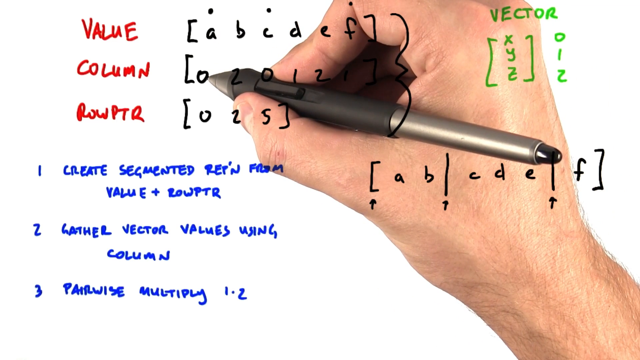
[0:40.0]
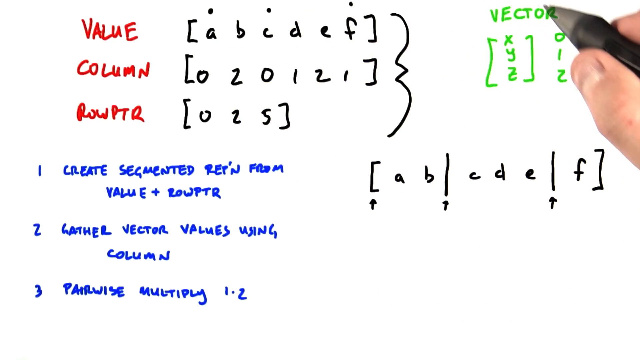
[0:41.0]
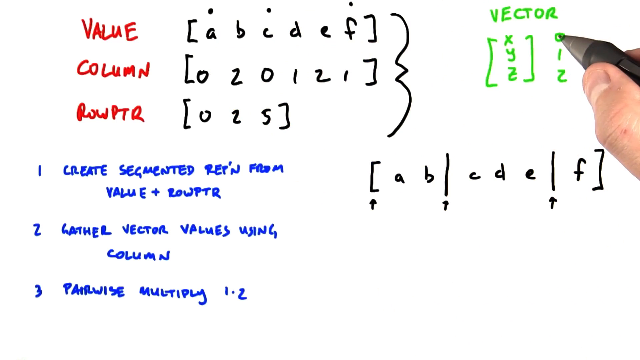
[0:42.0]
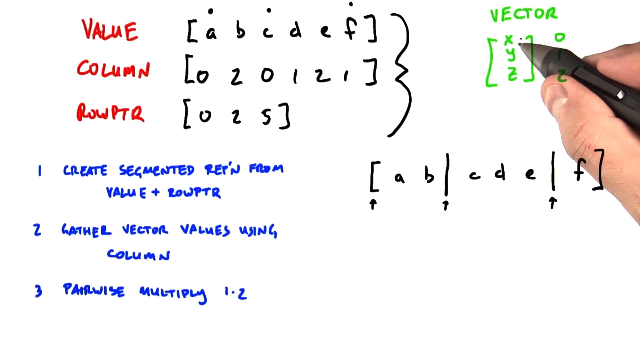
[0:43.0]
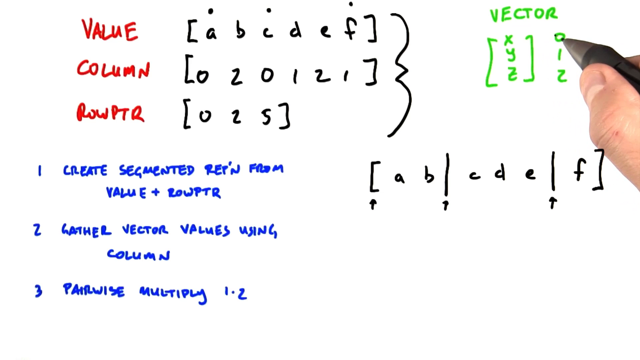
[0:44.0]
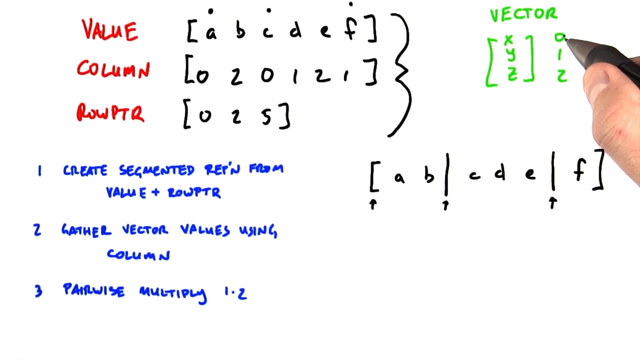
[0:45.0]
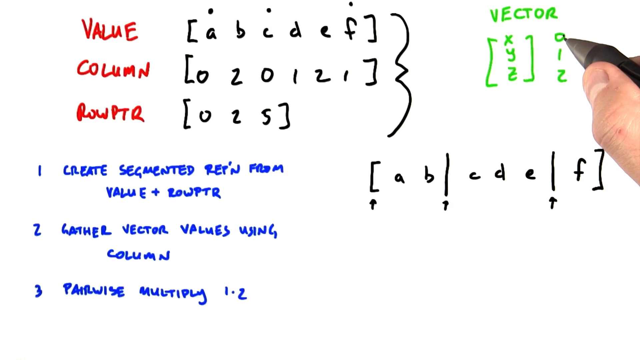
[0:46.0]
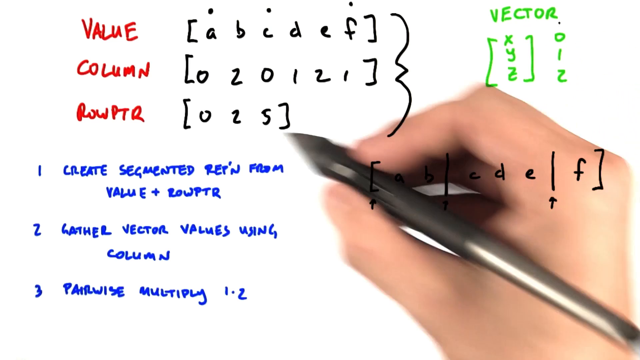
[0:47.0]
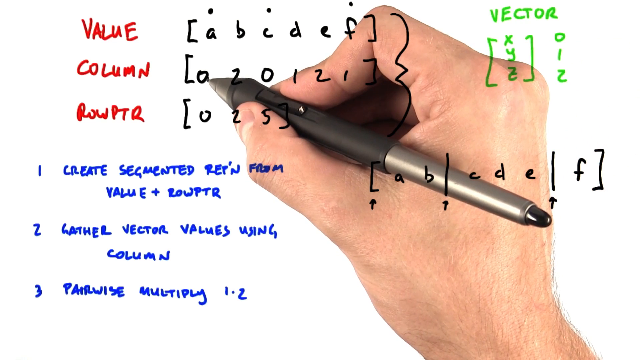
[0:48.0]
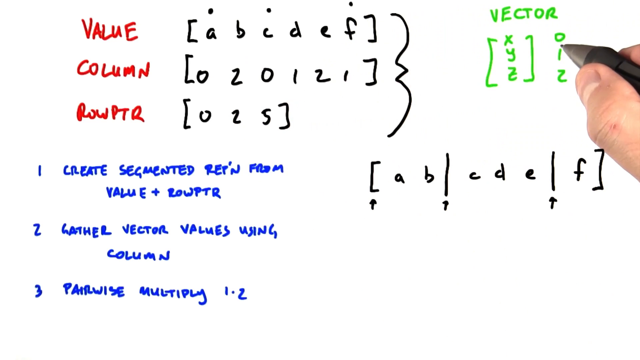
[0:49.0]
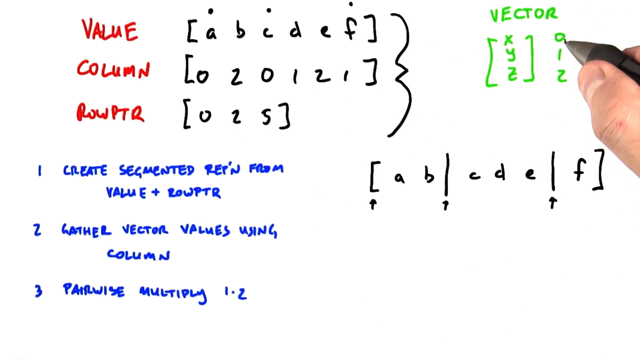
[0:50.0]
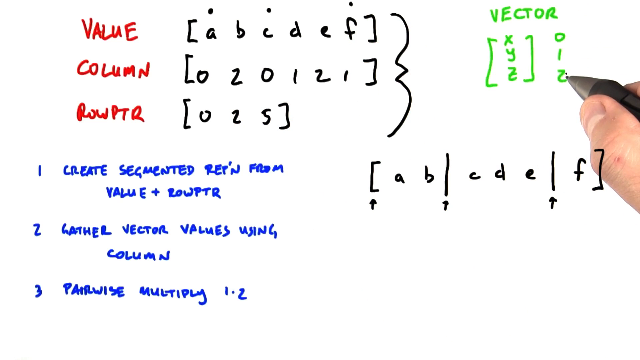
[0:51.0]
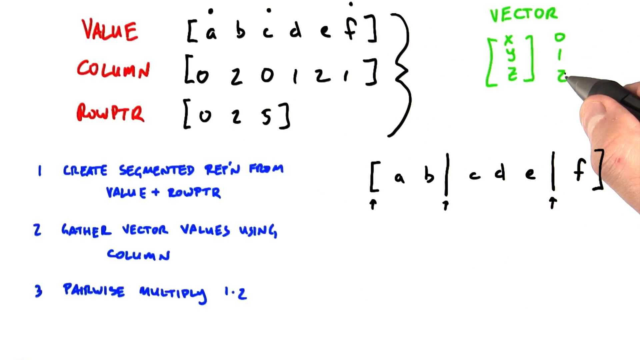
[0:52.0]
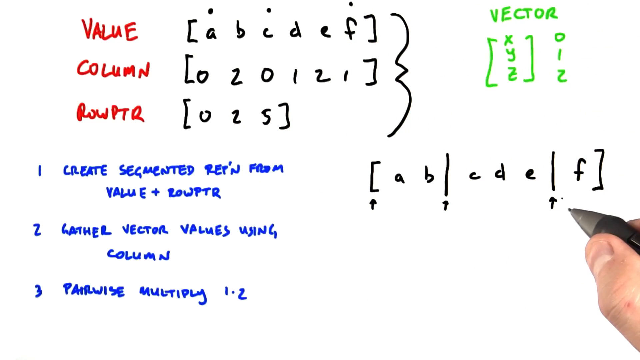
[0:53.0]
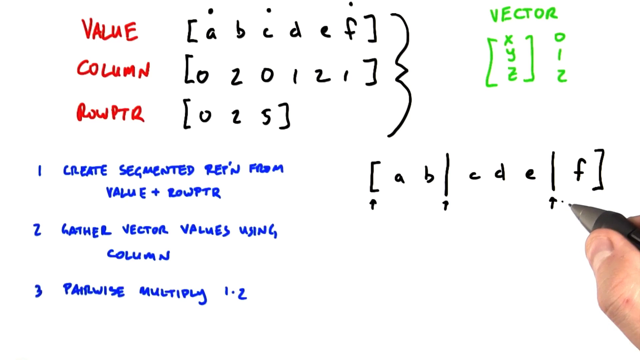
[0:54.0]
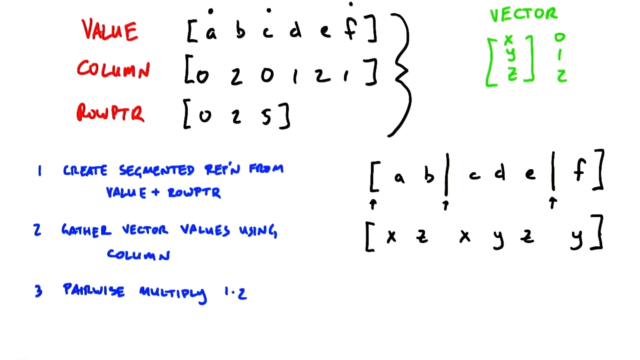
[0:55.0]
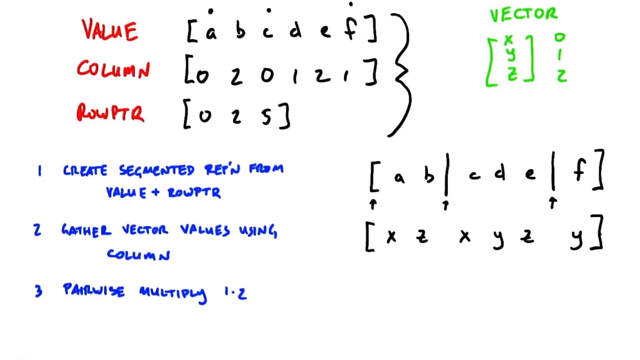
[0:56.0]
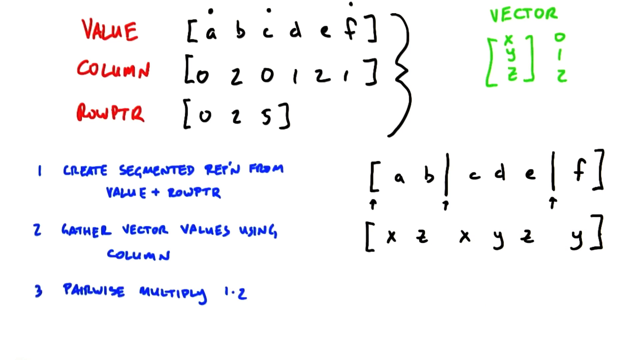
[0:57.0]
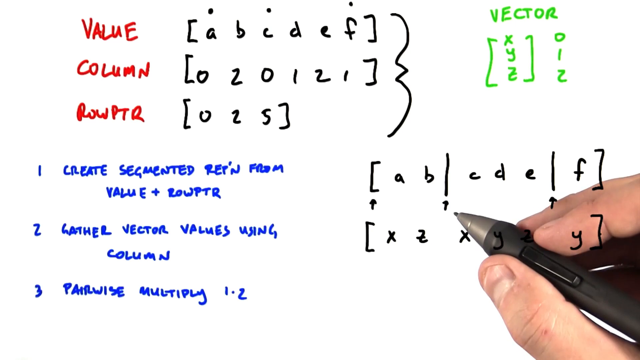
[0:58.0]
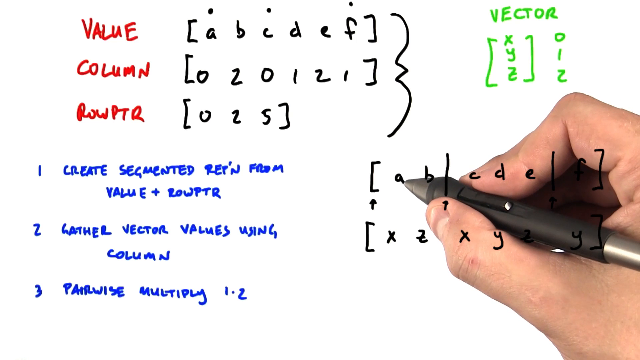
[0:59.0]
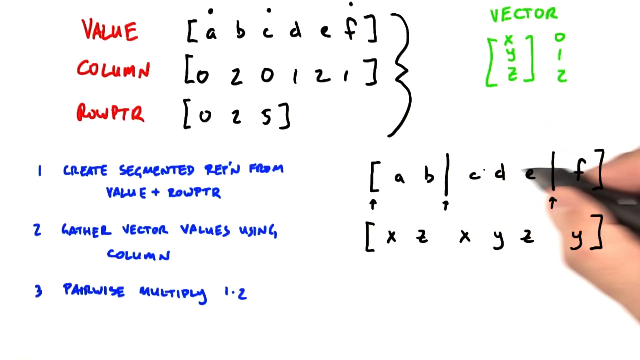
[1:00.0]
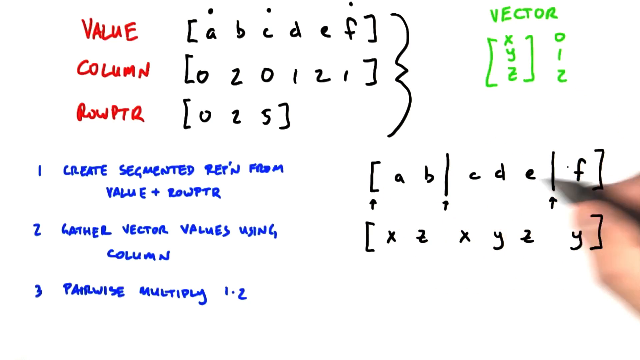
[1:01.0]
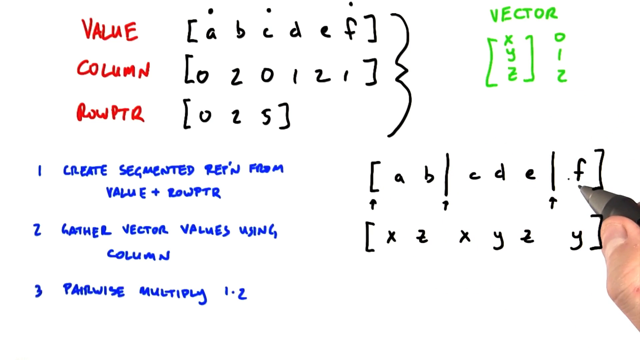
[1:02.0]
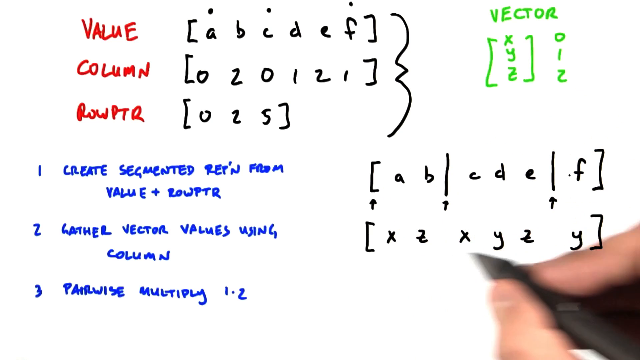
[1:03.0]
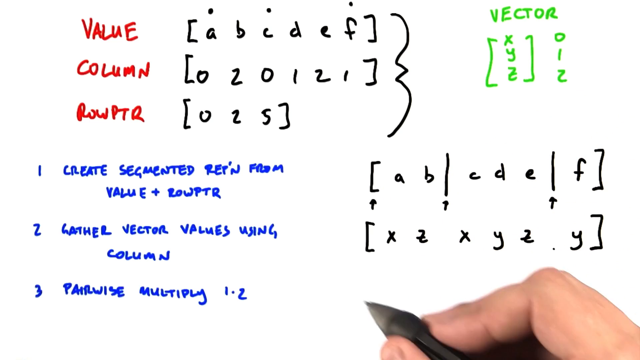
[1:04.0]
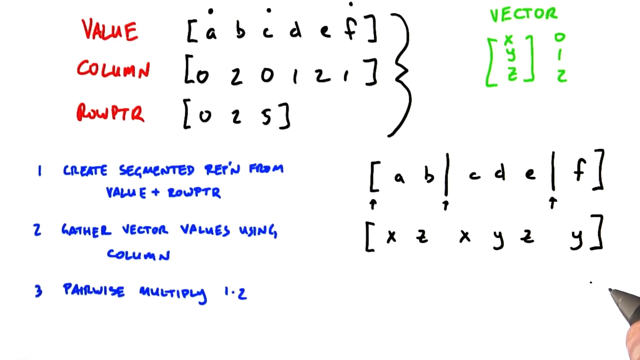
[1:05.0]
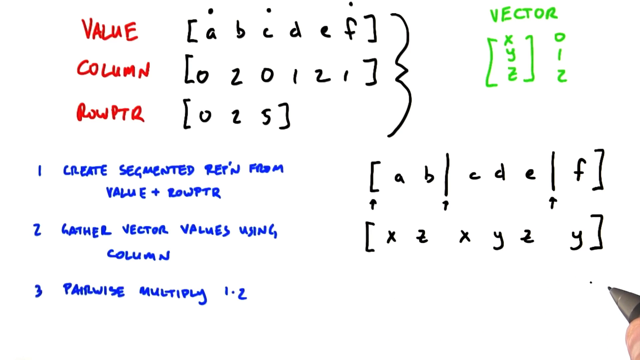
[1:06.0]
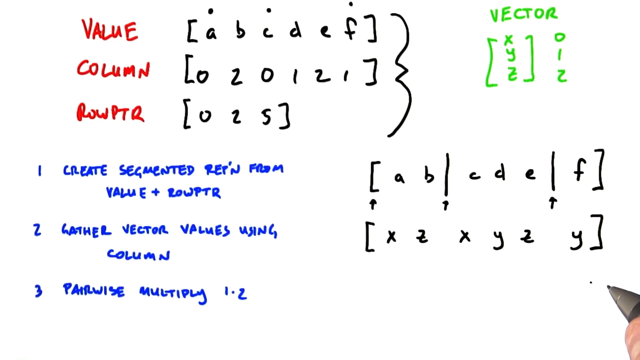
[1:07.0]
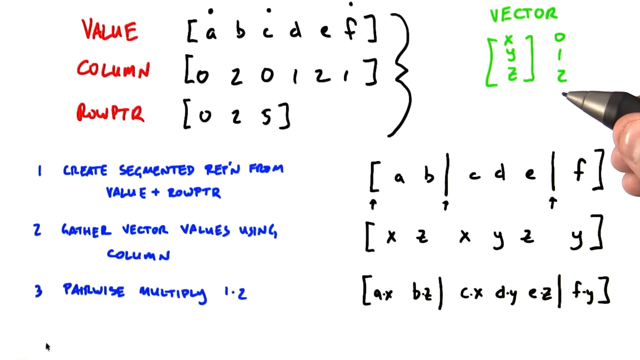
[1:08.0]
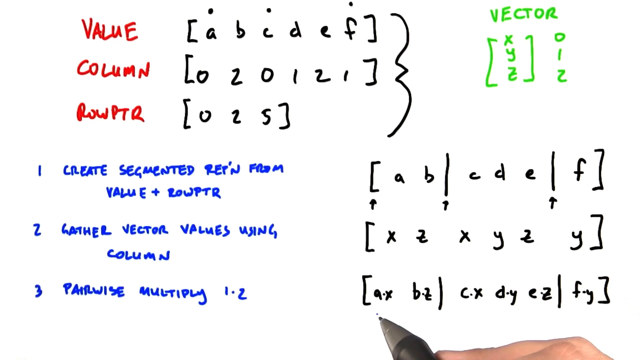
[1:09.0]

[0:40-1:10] A right hand holding a black pen makes edits near the word COLUMN, written in red. The hand moves to the right side of the screen and points at the label VECTOR, written in green. Directly underneath VECTOR are the letters X, Y, Z in parentheses, with the numbers 0, 1, and 2 next to them. The pen points at the letter X and the 0, then goes back to the Column label and points at the 0 in the parentheses next to it. The hand returns to the Vector area and, in an up-and-down motion, goes over the numbers 0, 1, and 2 with the pen. The hand then moves downward to where arrows were drawn by the segmented lines of an equation by step 1. A new set of brackets appears with the letters X, Z, X, Y, Z, Y next to step 2, and the hand gestures toward the letters. Finally, another set of brackets appears showing an equation next to step 3.